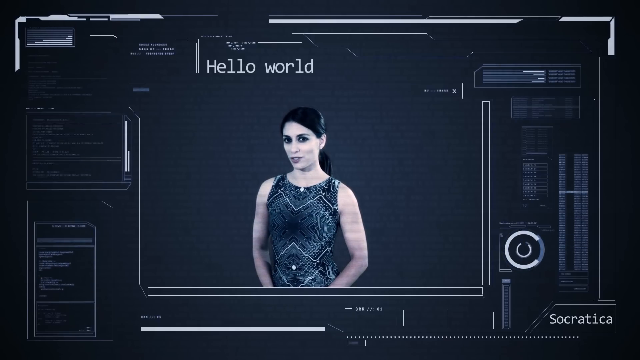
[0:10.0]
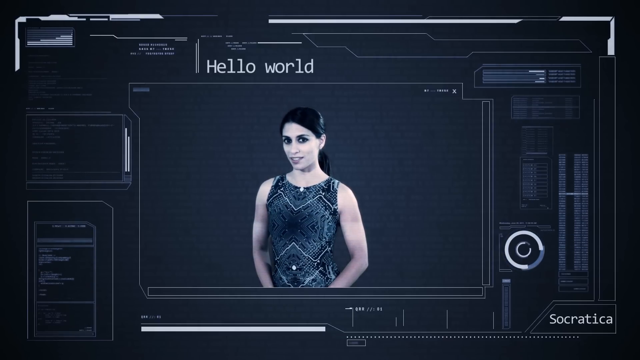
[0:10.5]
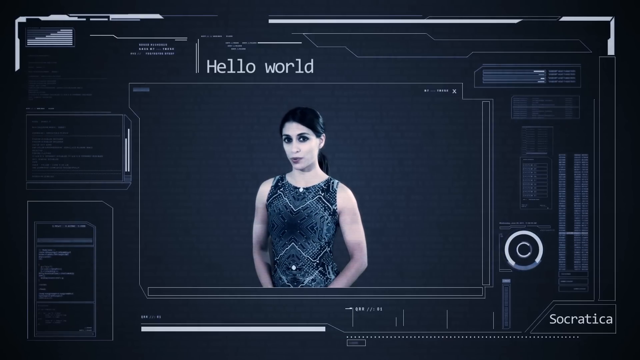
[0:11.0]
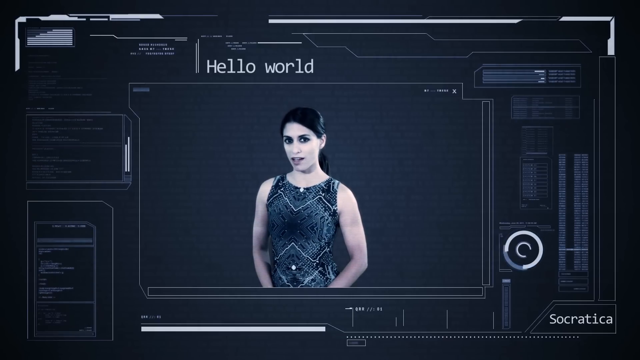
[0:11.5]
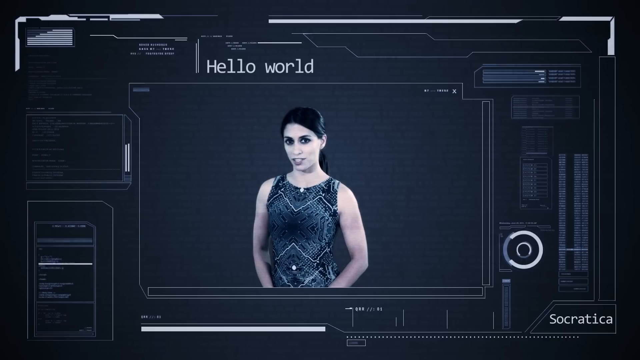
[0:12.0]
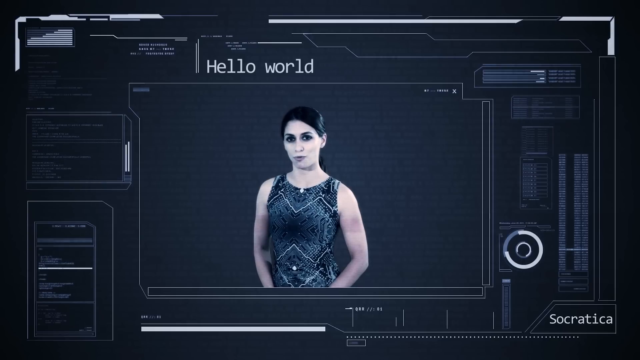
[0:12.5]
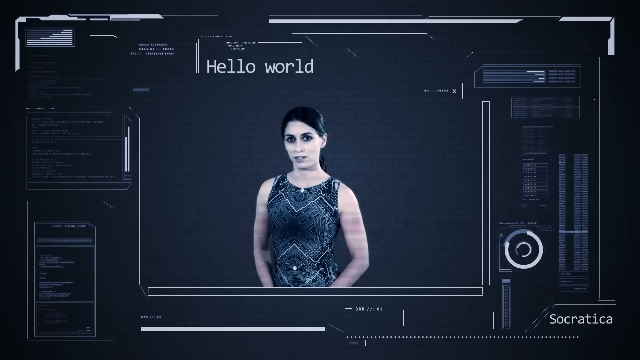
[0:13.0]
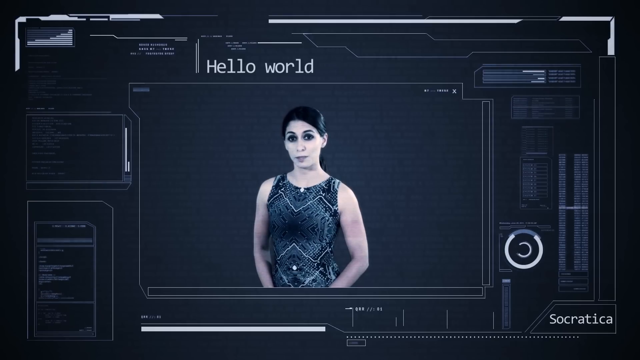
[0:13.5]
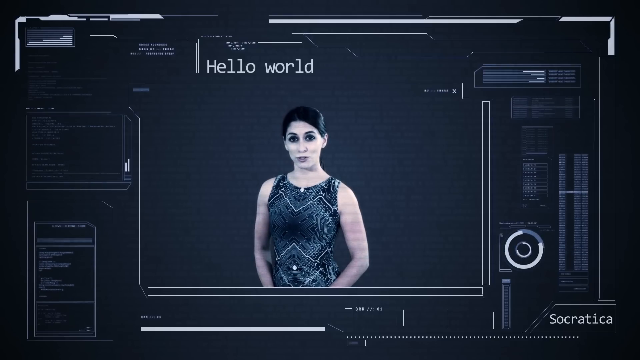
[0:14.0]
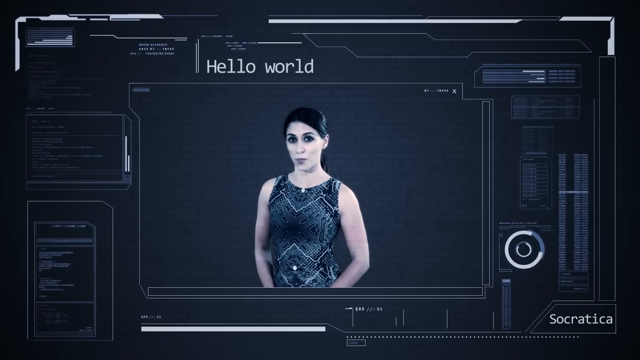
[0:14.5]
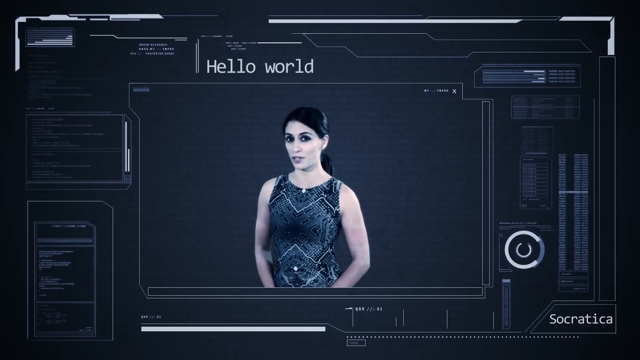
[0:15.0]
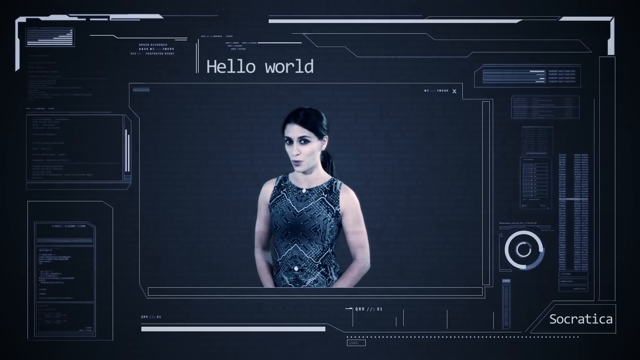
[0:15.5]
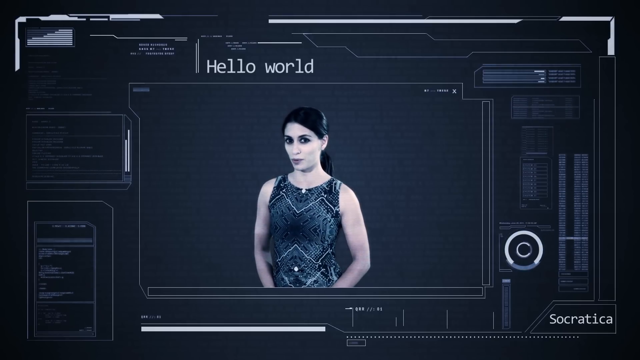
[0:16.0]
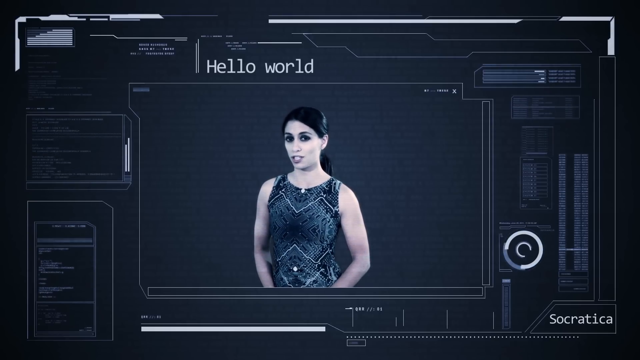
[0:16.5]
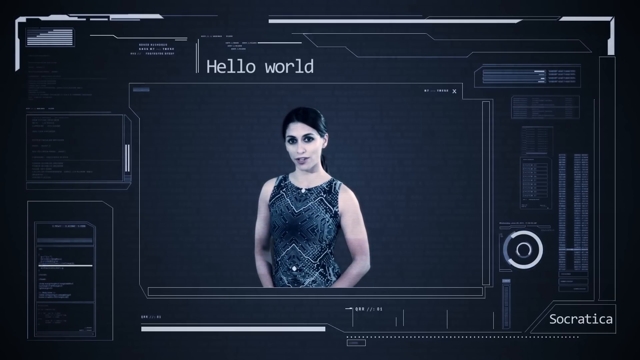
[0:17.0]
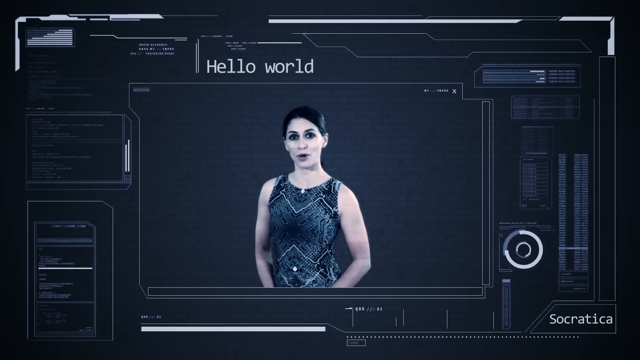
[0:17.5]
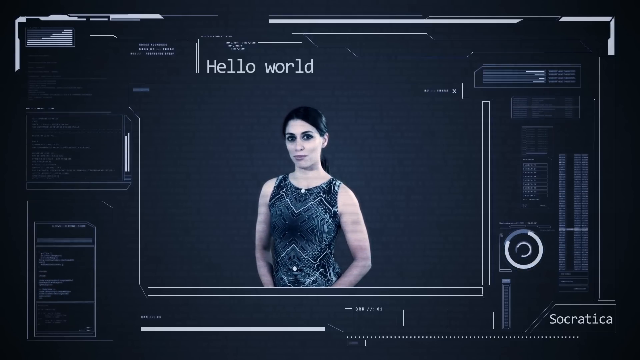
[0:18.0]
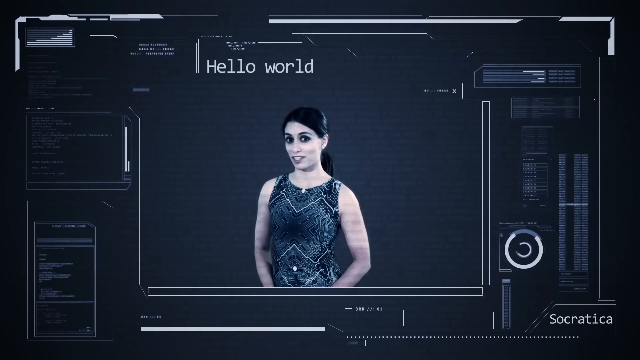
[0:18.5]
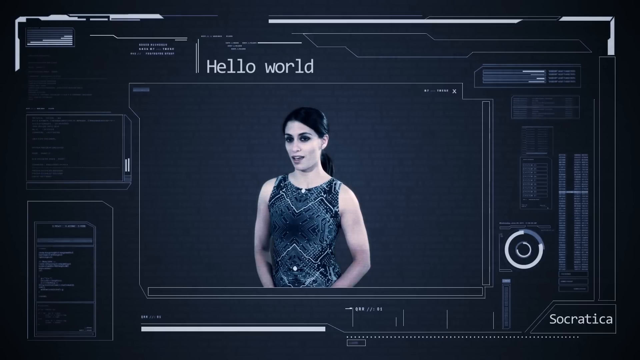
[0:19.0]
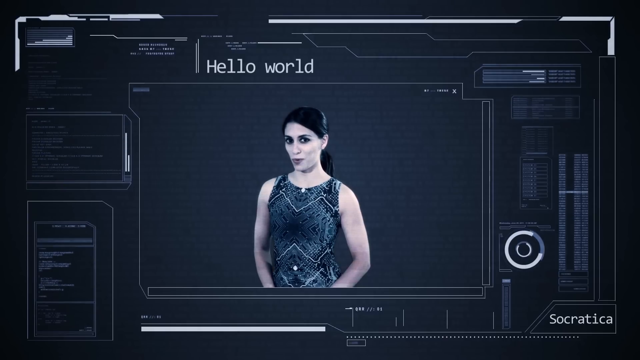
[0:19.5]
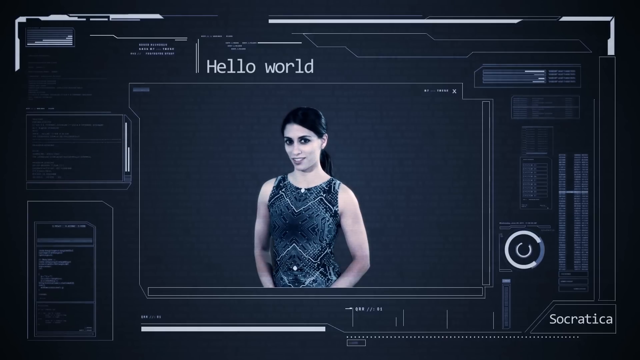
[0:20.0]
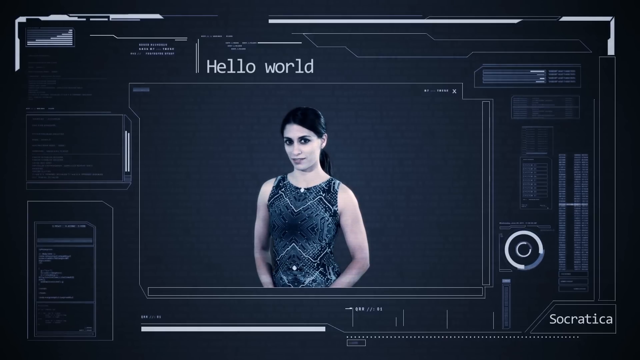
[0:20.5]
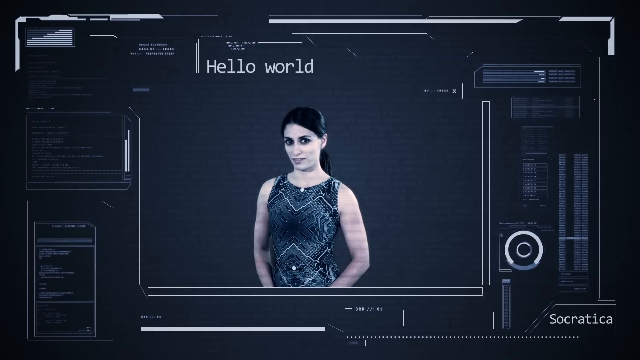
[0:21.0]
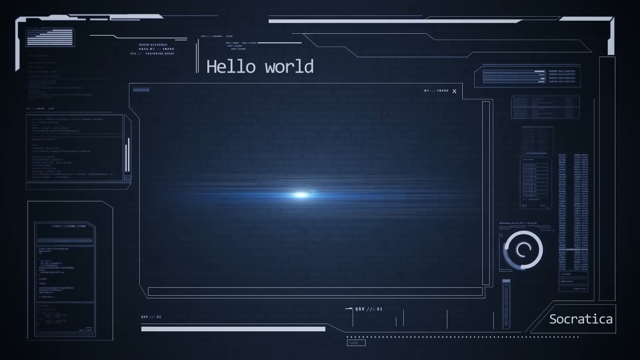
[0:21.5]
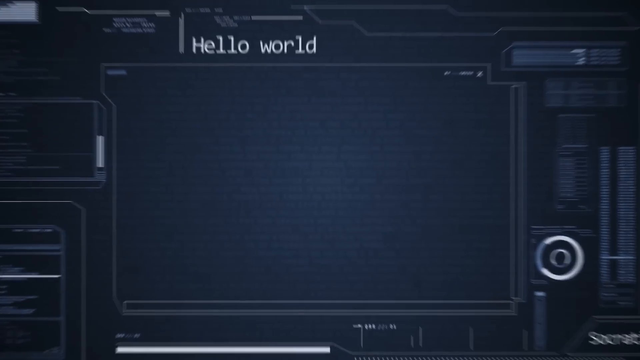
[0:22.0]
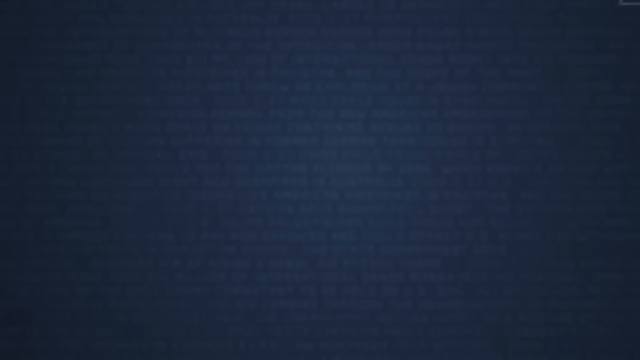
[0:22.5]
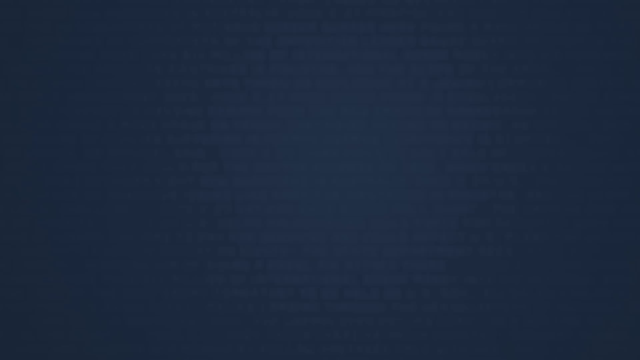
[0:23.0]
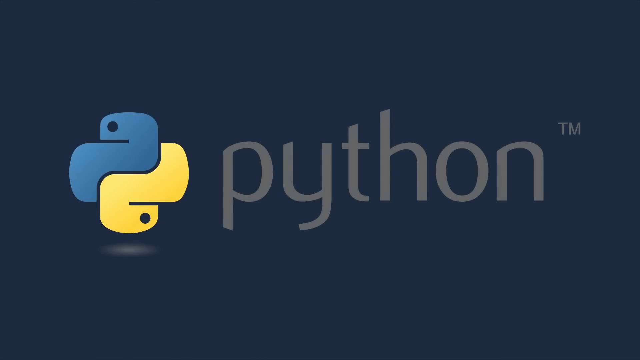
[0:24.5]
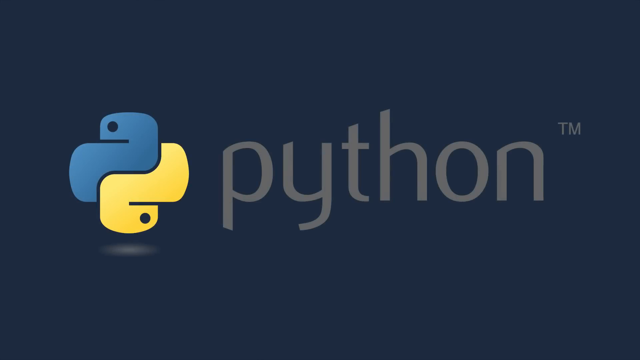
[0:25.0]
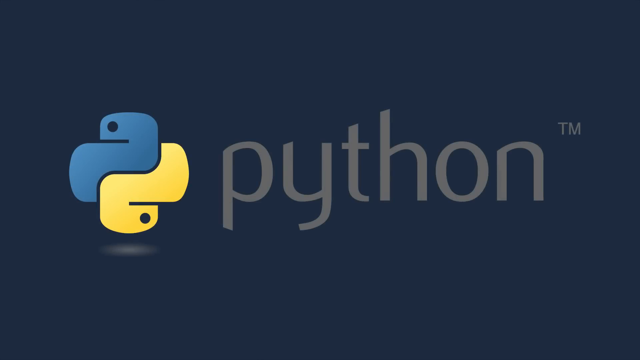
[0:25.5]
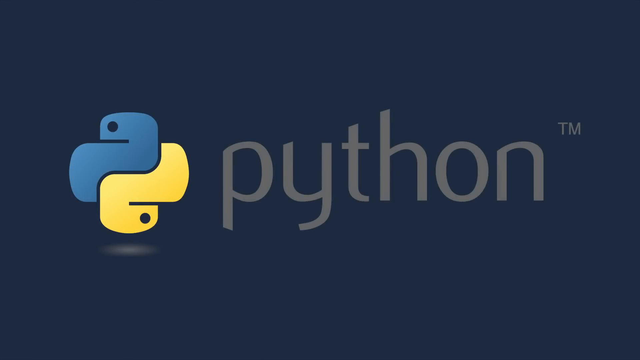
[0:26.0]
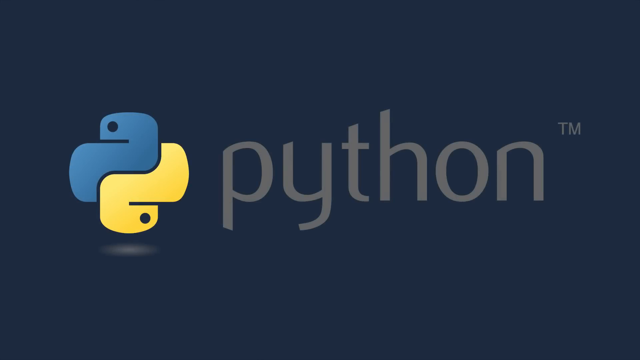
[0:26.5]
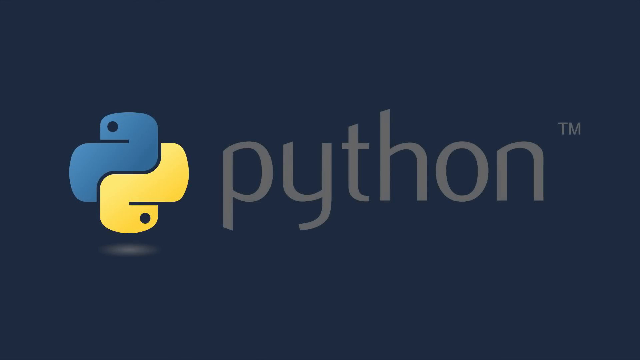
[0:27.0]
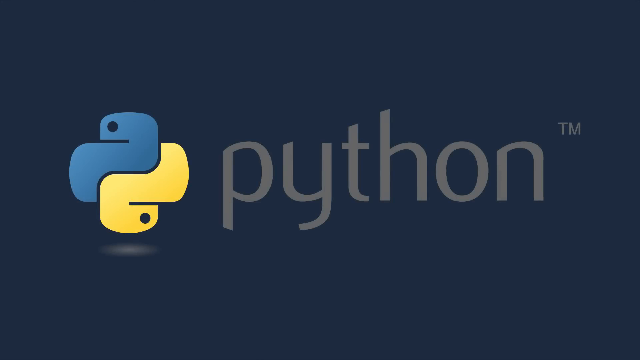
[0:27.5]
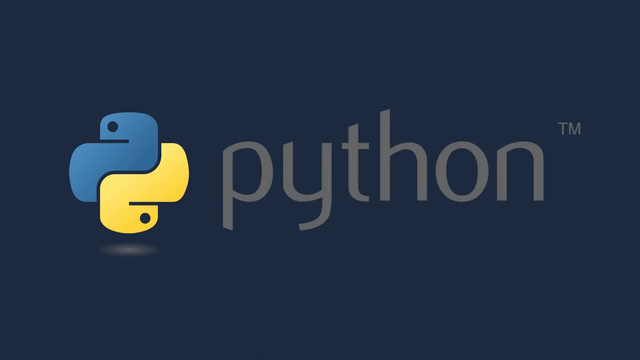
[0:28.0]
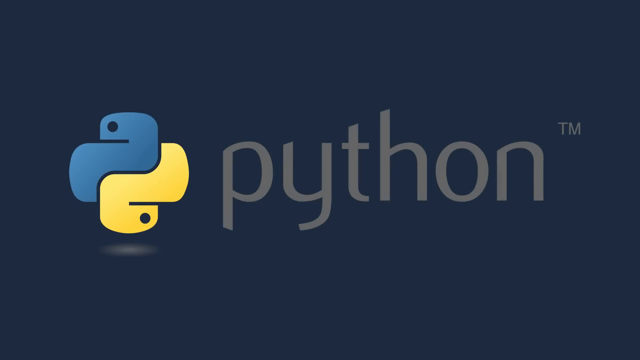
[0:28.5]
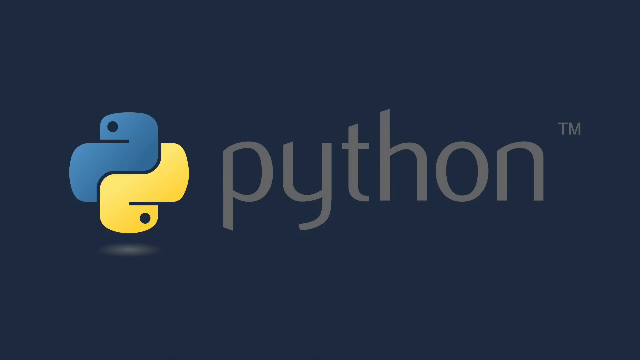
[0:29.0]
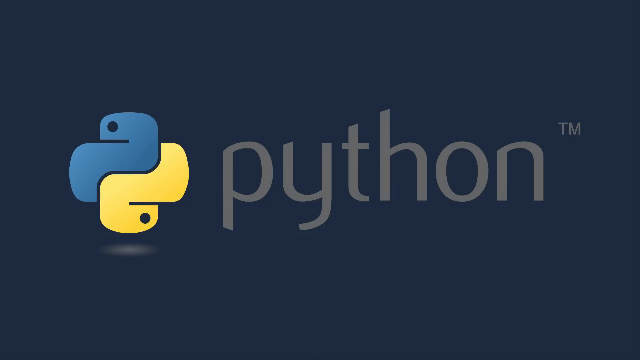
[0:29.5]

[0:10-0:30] The woman in the middle of the screen keeps talking, standing still with her arms at her sides. She wears a blue dress and has black hair and white skin. She holds the same pose, uses no gestures while talking, and stays centered on the screen. White text above her says "hello world". The background is dark blue, with a technological themed interface of various text and code. The central screen then plays a powering-off animation, the woman disappears, and the view zooms into the empty screen. The background turns into a solid dark blue gradient, and the word "Python" emerges in grey text, with the blue and yellow Python logo to its left and a TM at the top right. The logo stays on screen.